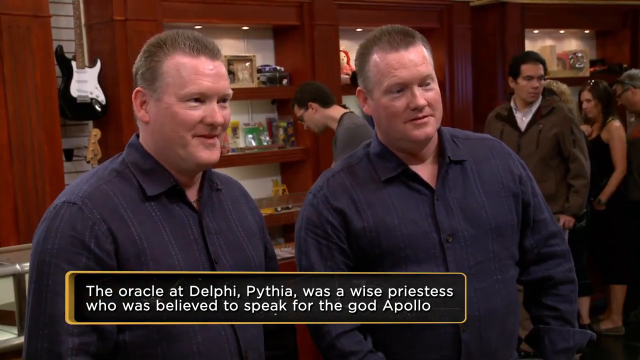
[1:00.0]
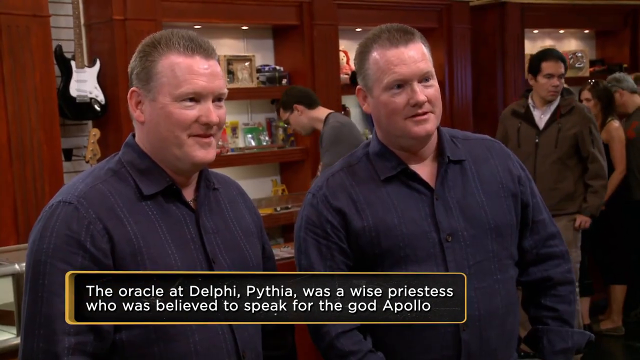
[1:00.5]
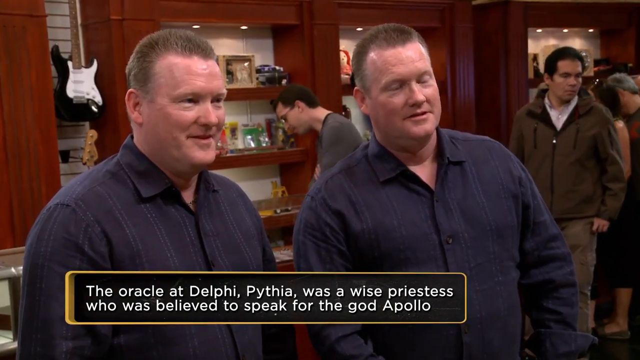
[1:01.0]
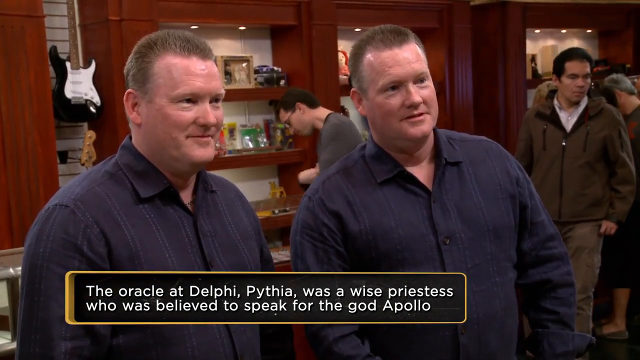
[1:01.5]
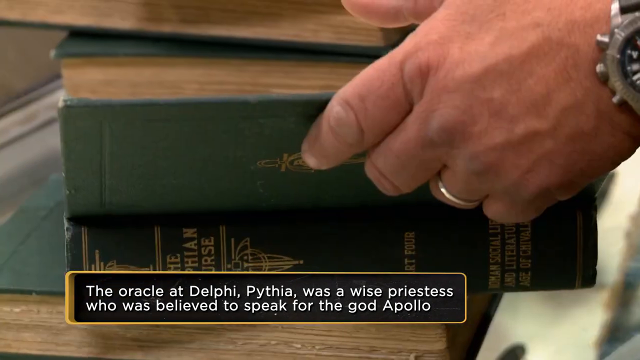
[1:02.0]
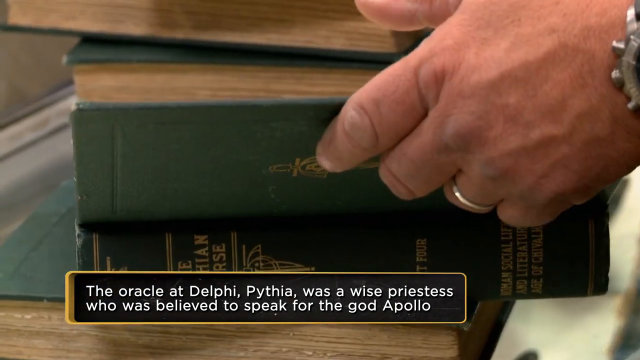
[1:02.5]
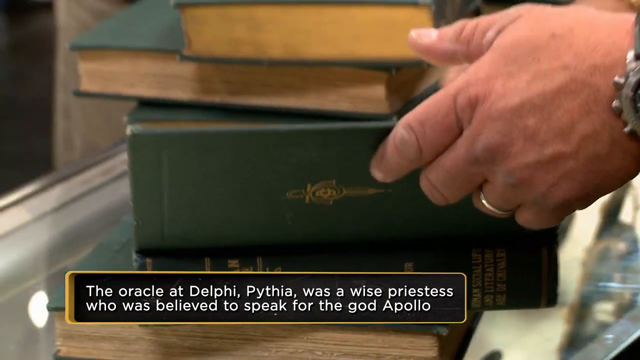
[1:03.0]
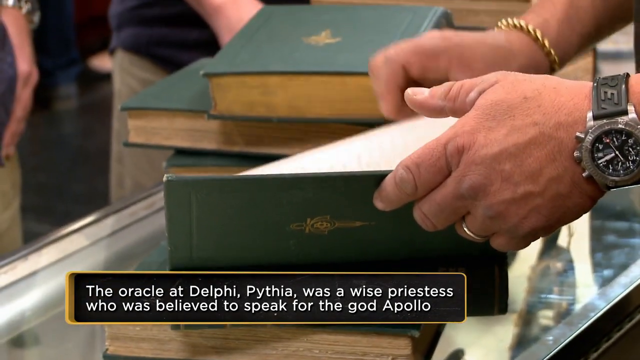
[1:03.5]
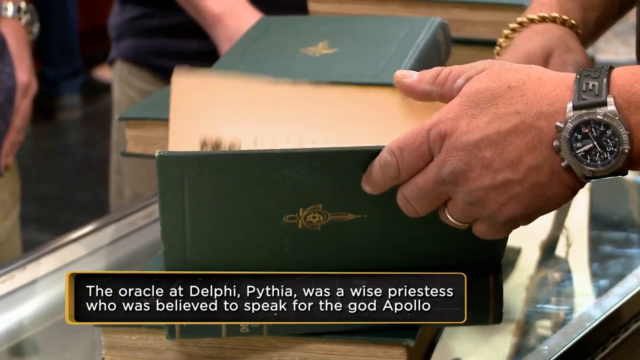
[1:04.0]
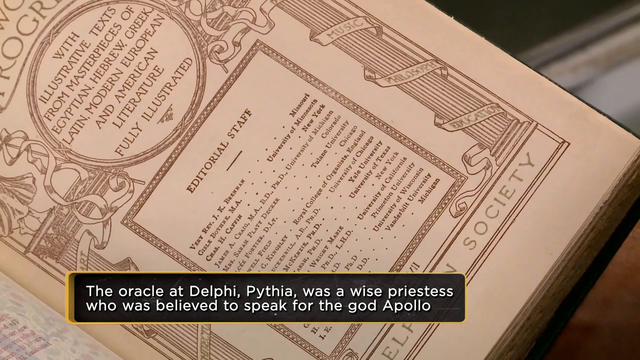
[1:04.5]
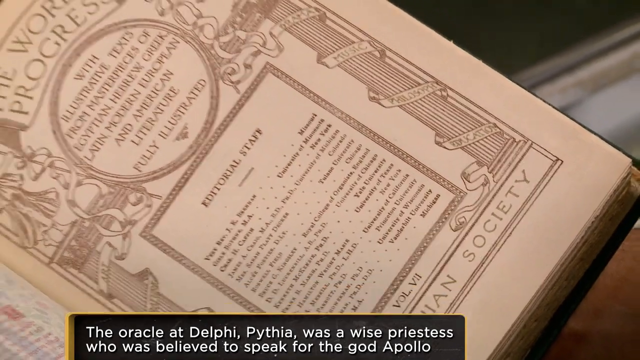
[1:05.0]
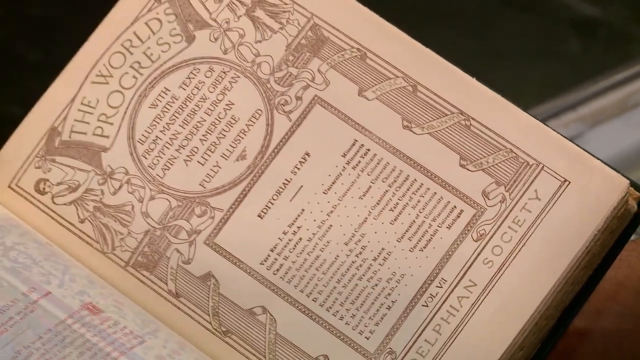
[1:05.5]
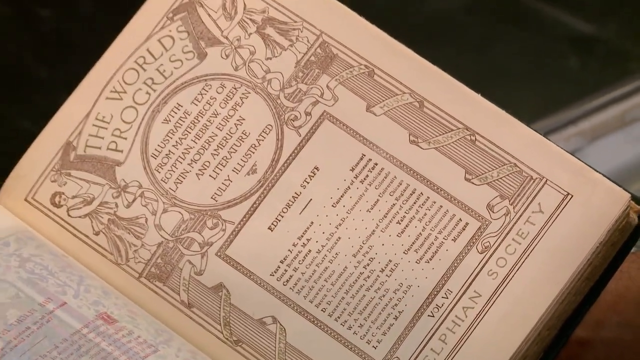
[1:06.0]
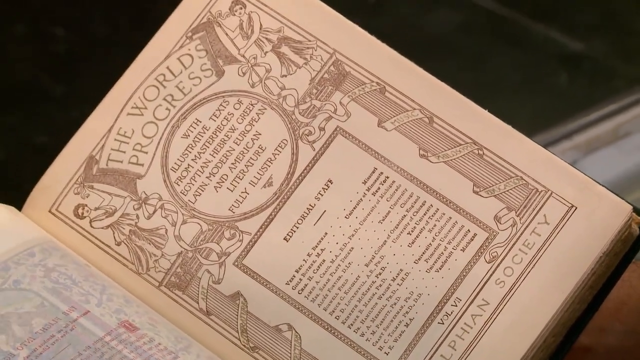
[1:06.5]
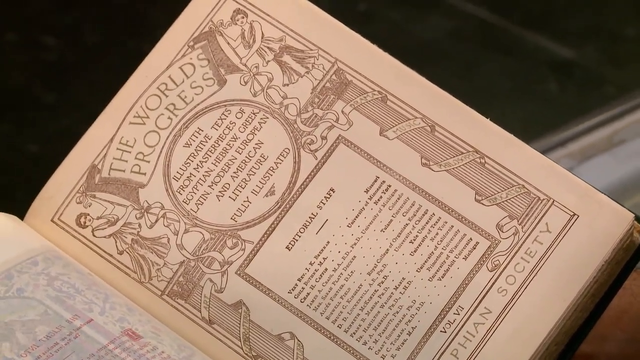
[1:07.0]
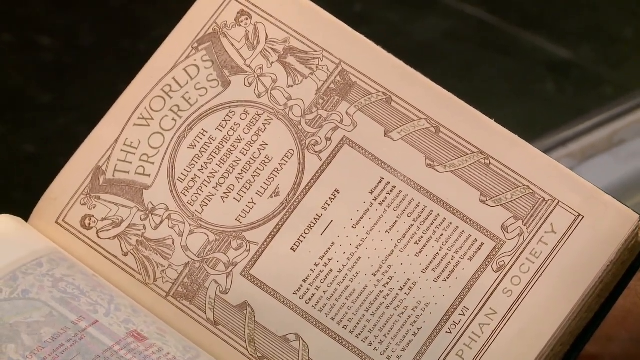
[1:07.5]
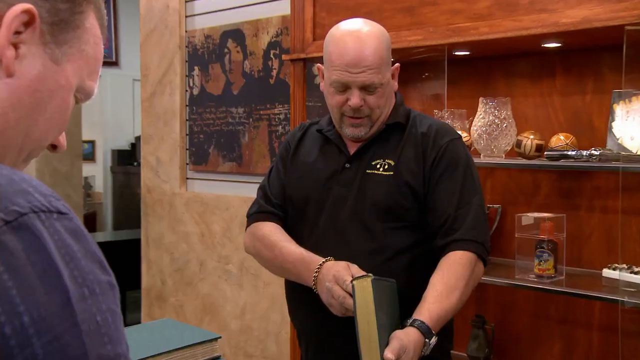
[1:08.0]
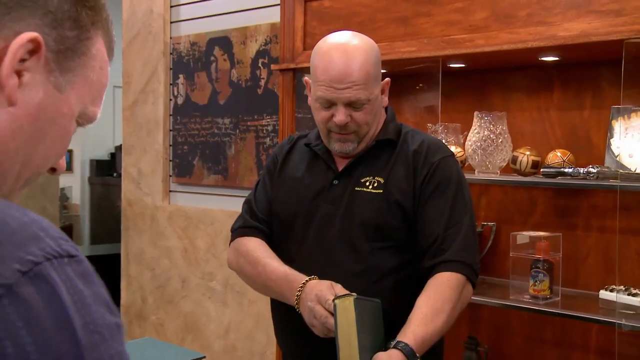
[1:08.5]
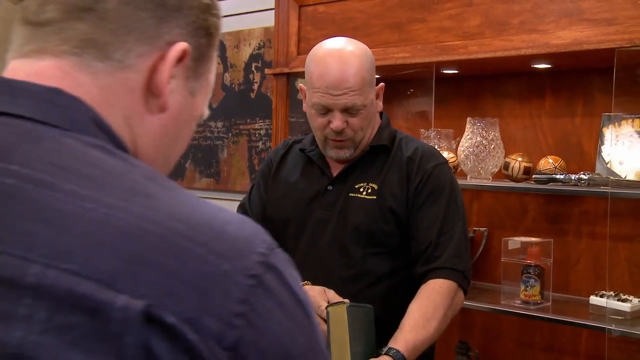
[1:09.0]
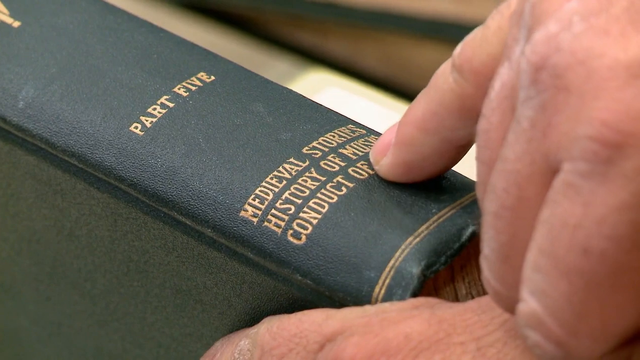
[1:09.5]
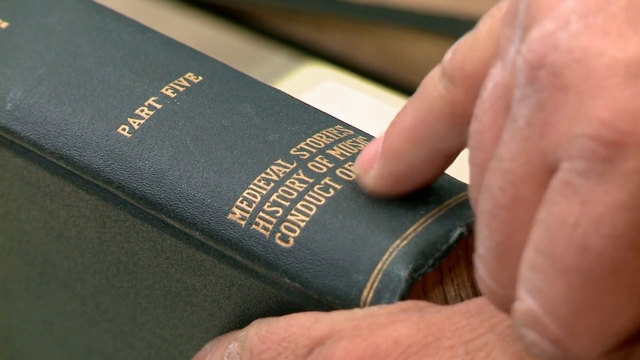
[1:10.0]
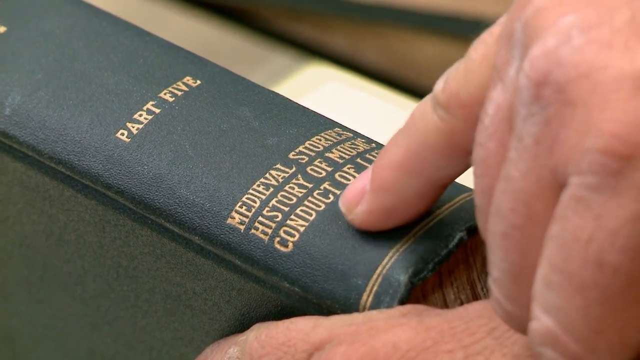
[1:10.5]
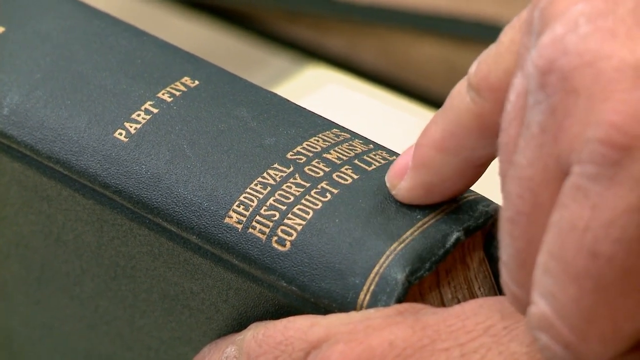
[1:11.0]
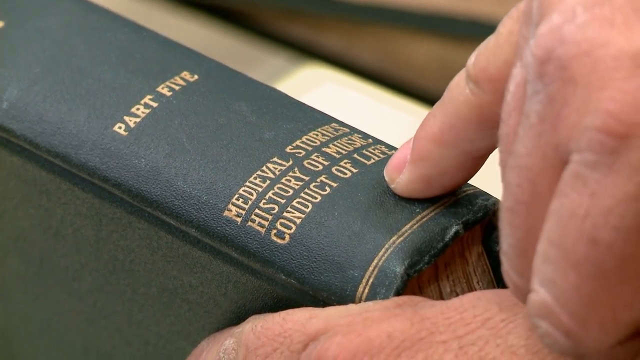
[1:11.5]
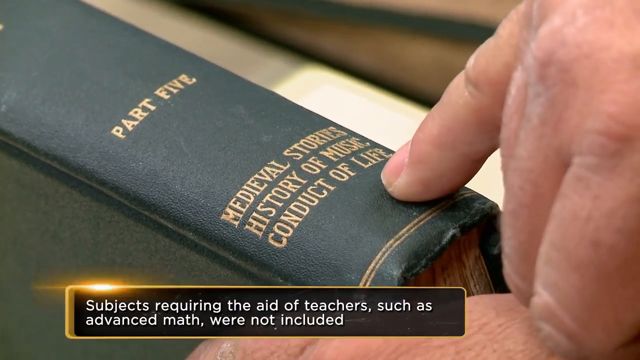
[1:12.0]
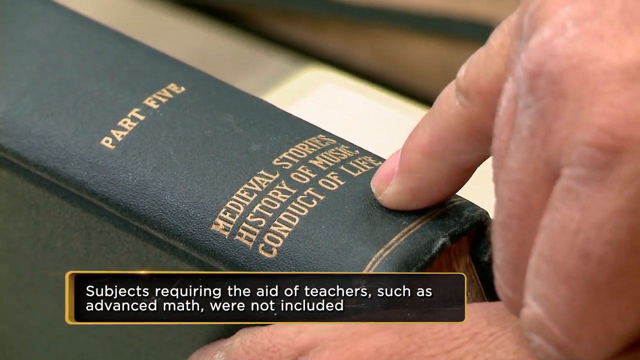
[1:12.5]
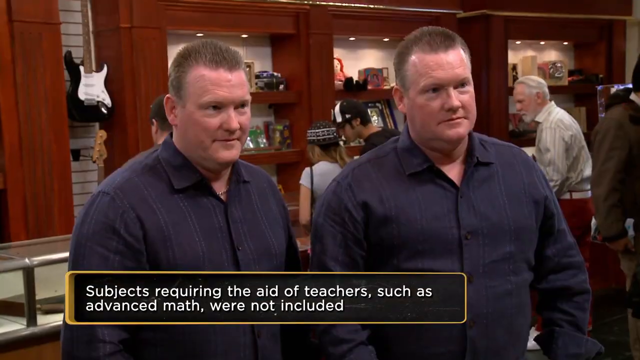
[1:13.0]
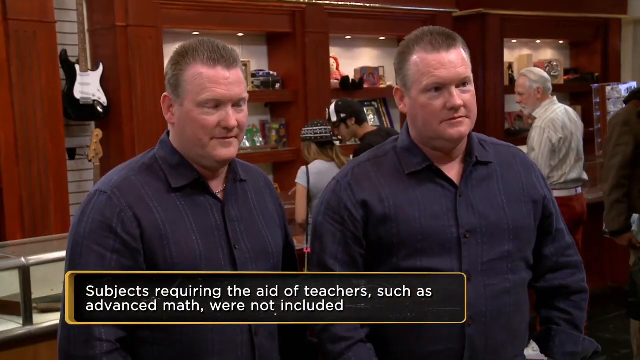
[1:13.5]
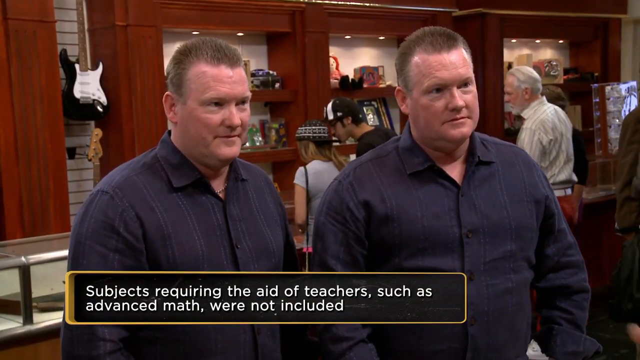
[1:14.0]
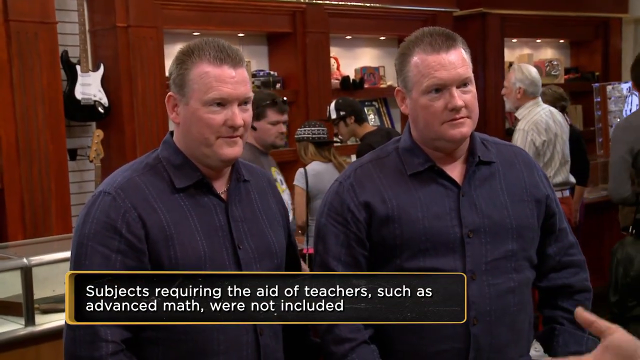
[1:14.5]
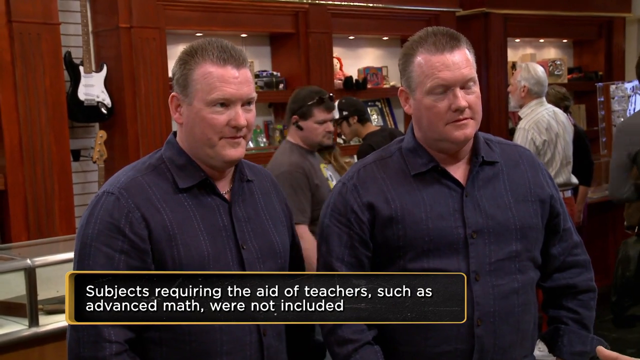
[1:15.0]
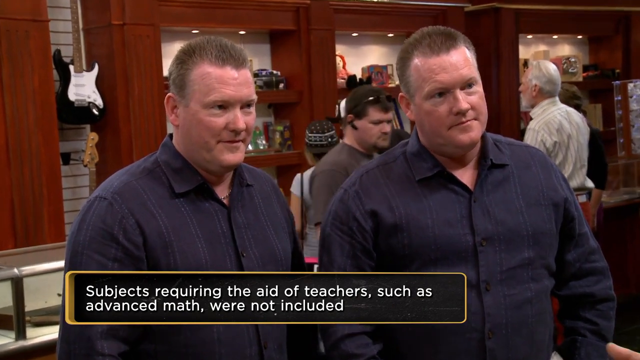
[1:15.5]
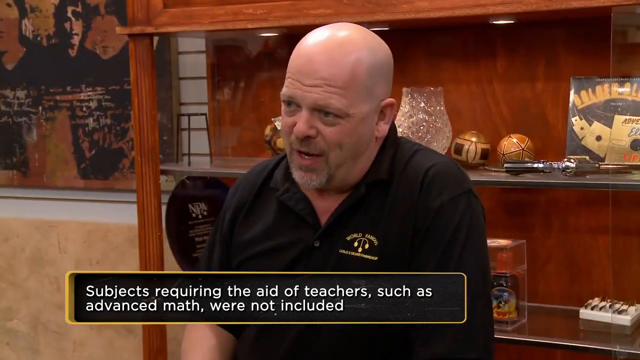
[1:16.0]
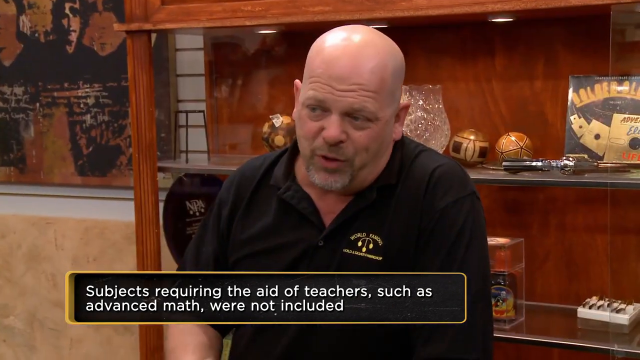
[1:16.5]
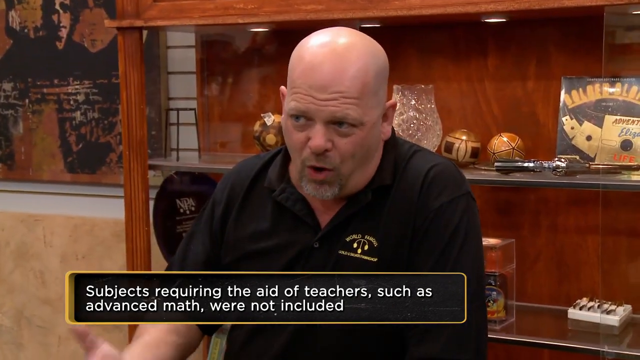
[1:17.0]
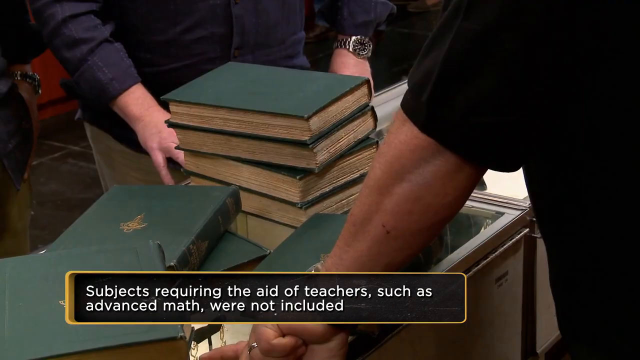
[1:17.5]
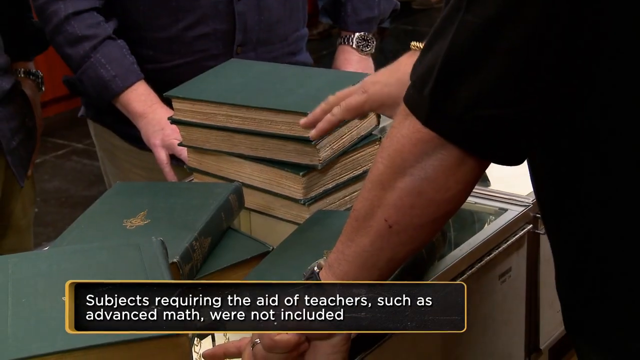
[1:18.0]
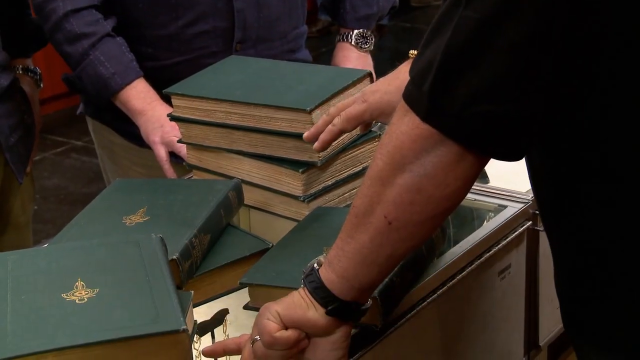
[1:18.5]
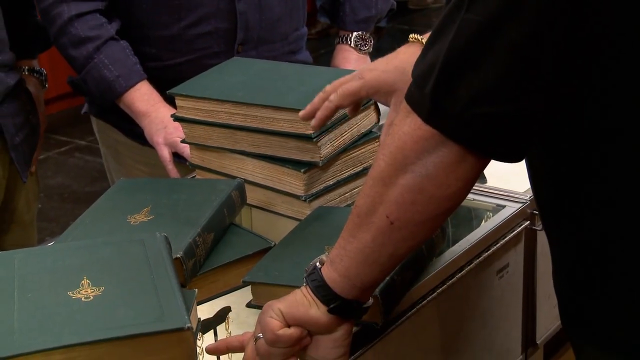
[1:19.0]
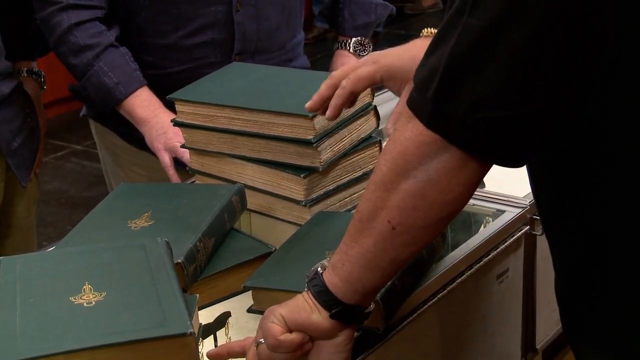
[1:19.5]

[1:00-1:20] The two brothers, Derek and Eric, are still chatting, while people walk around behind them, browsing. A close-up shows the man behind the counter in the short black shirt leafing through the pages of one volume of the Delphian Course, the world's progress. He then points at the spine of a book reading part five, medieval stories, history of music, and conduct of life. Text appears on screen: "subjects requiring the aid of teachers such as advanced math were not included". The man behind the counter seems knowledgeable and appears to be explaining things to Derek and Eric, who stand with the books around them. A close-up shows the books with Derek and Eric's hands near them. They are still in what seems to be an antique shop rather than a bookshop, with people going about their business.